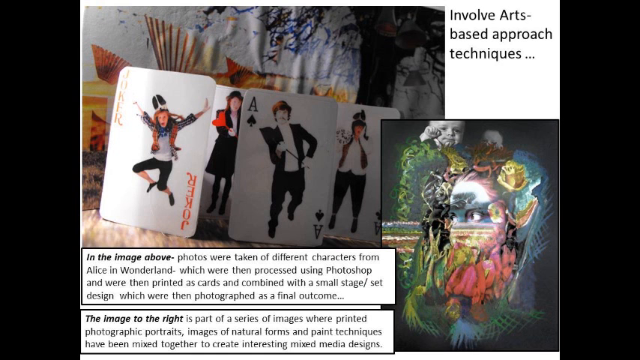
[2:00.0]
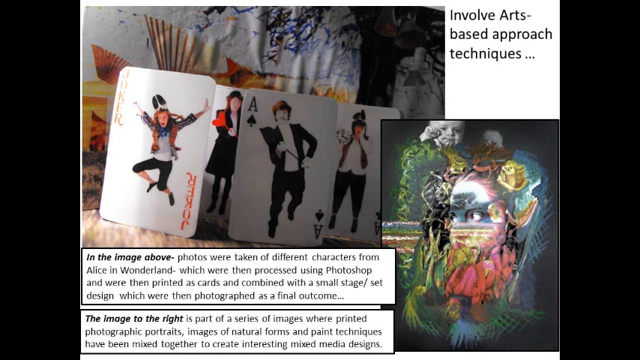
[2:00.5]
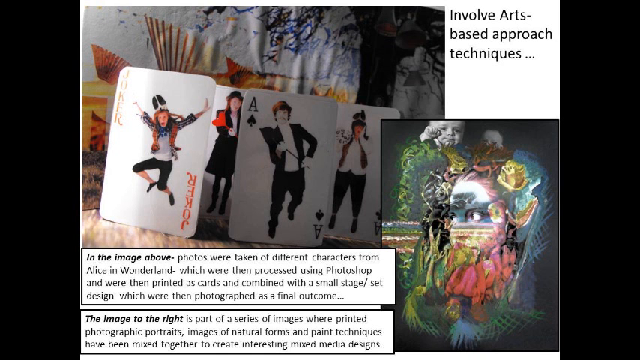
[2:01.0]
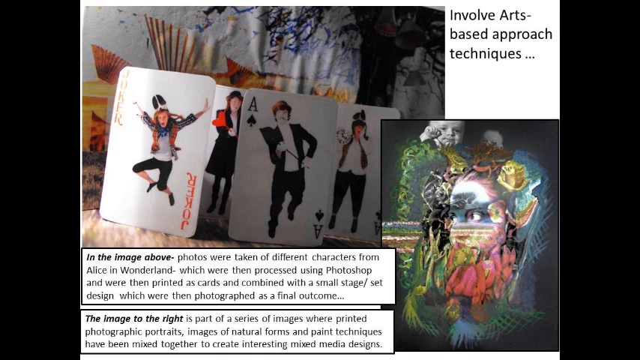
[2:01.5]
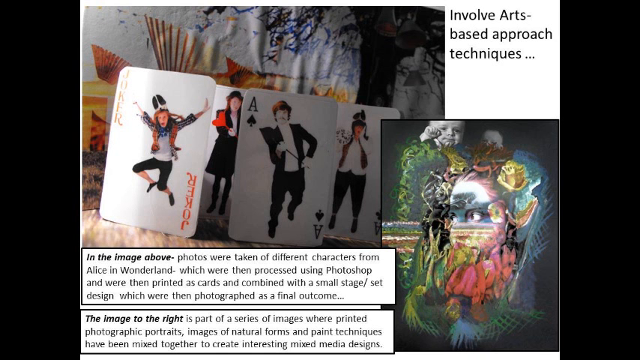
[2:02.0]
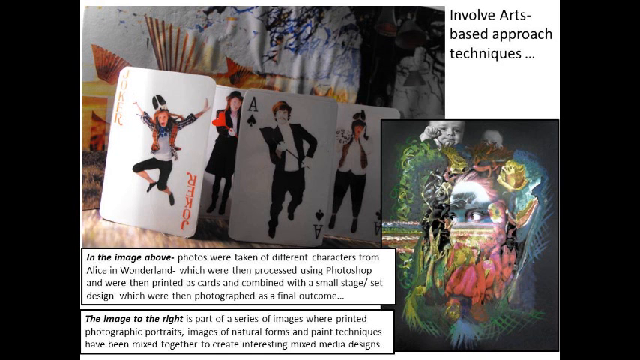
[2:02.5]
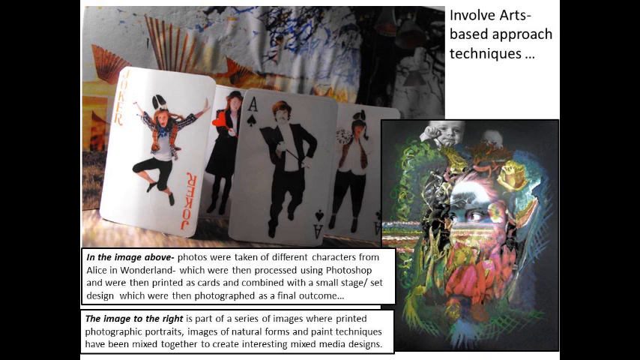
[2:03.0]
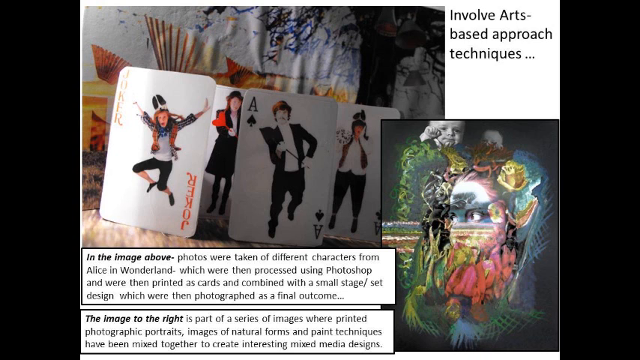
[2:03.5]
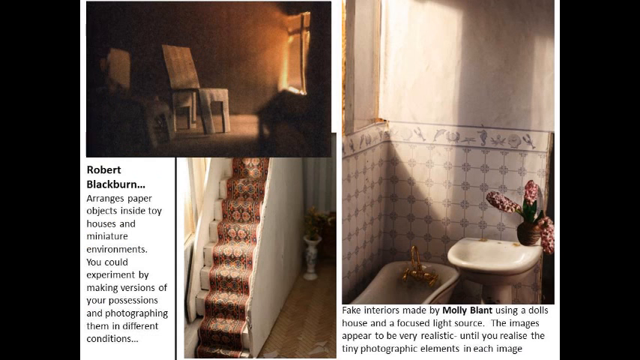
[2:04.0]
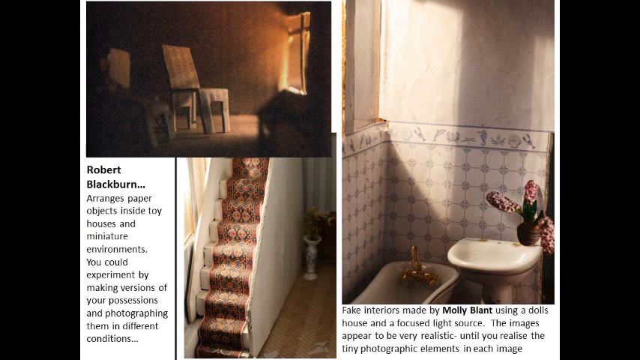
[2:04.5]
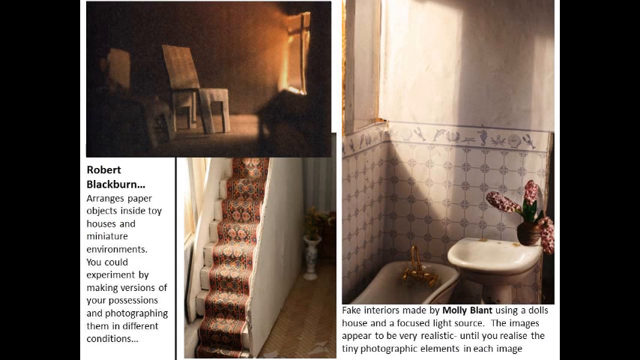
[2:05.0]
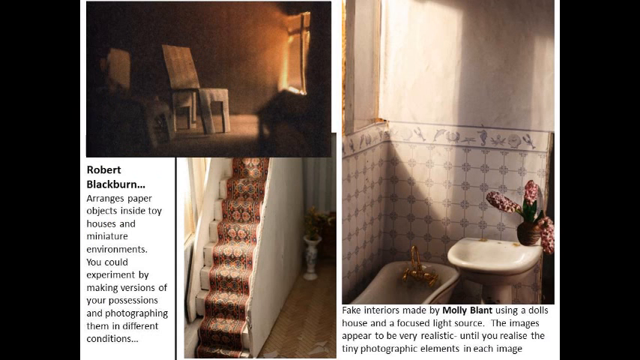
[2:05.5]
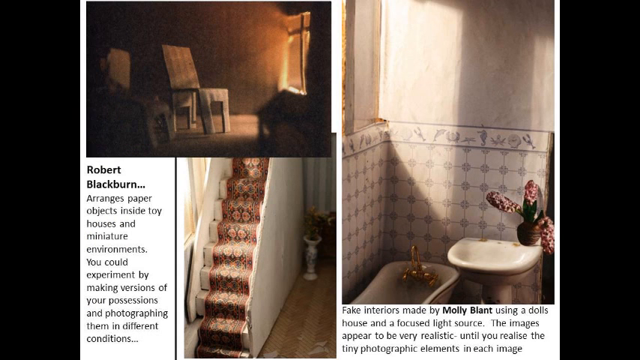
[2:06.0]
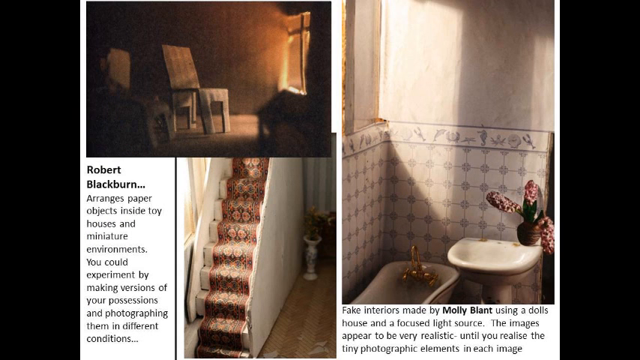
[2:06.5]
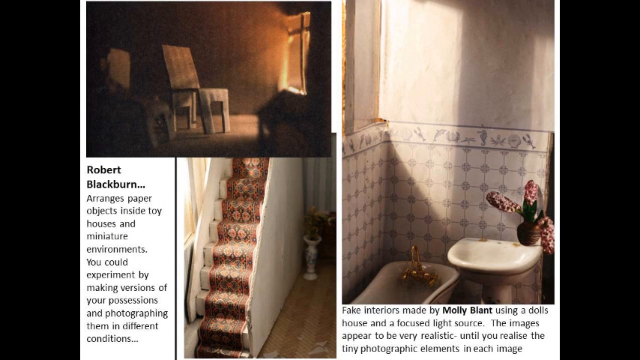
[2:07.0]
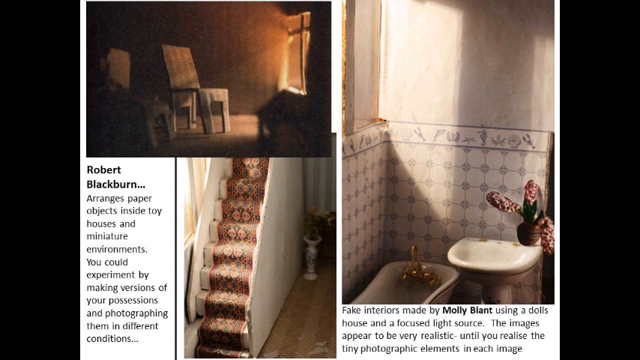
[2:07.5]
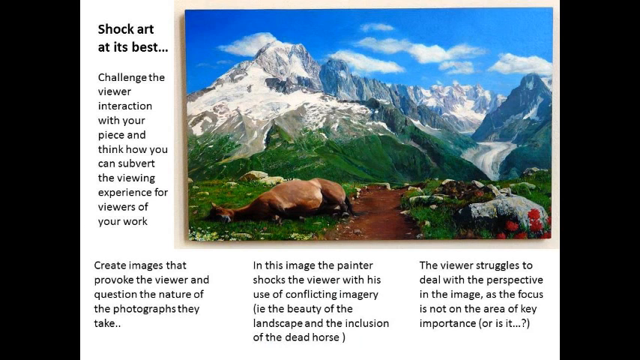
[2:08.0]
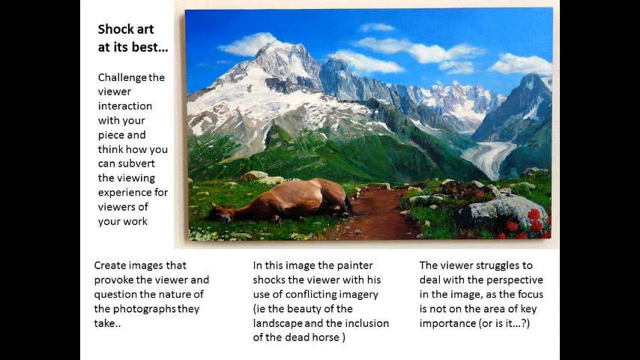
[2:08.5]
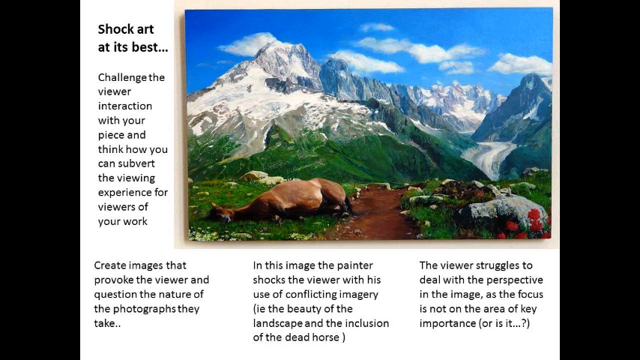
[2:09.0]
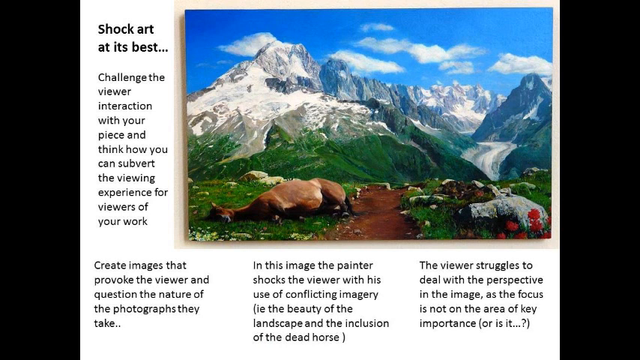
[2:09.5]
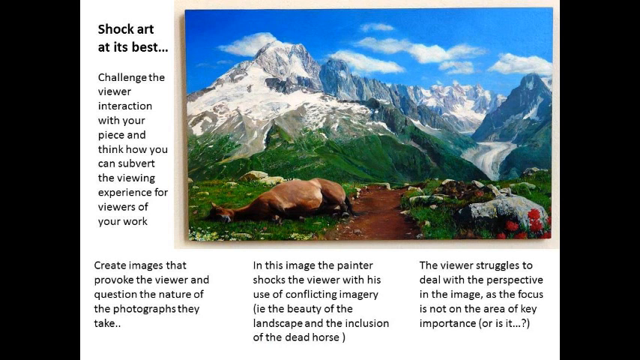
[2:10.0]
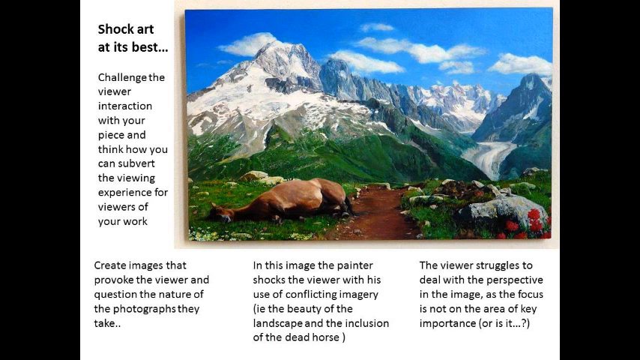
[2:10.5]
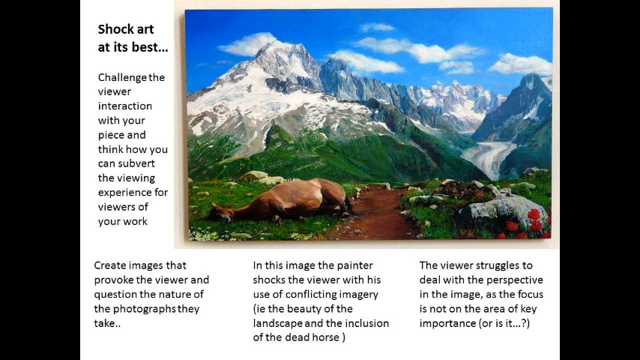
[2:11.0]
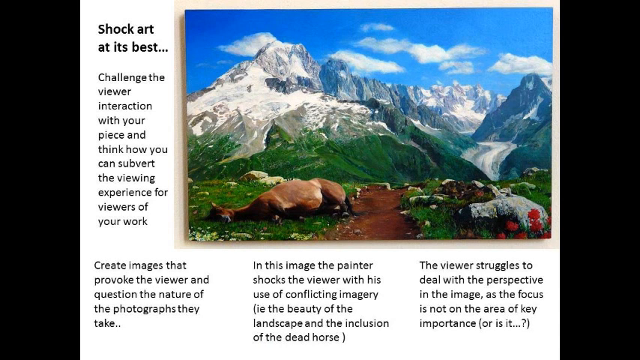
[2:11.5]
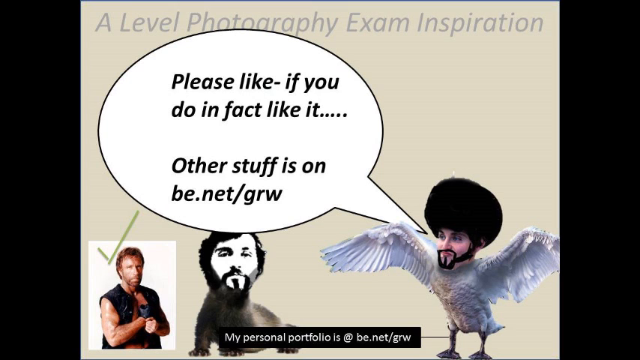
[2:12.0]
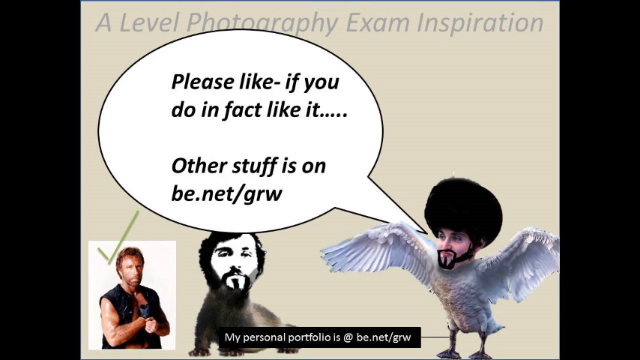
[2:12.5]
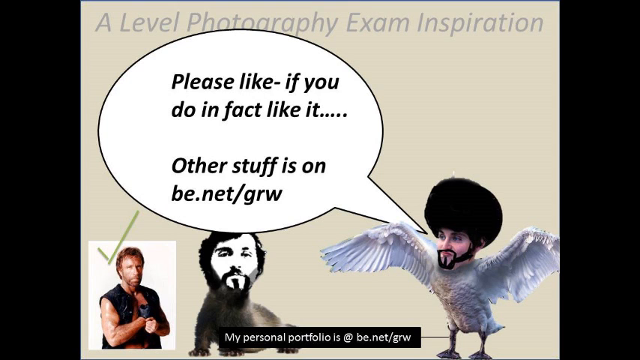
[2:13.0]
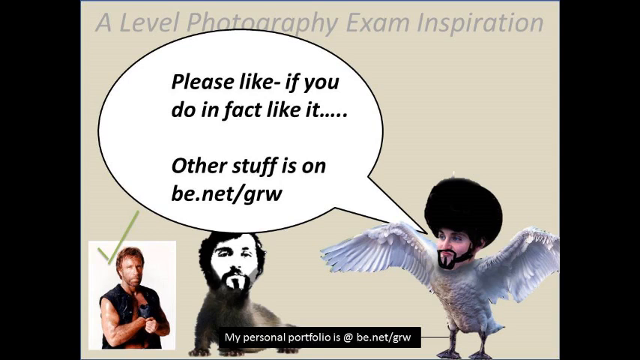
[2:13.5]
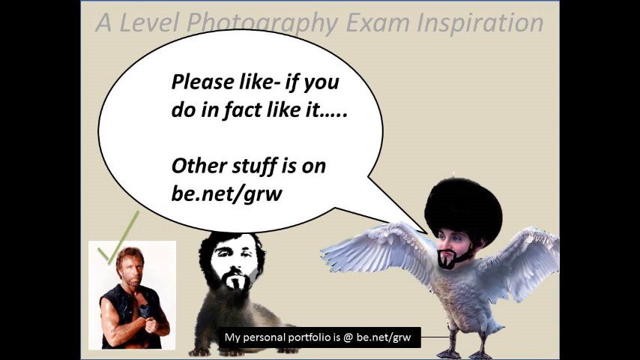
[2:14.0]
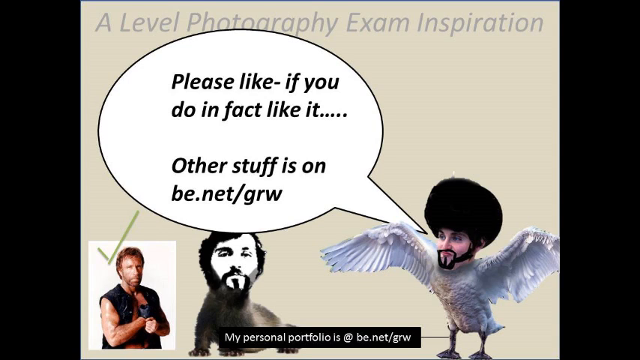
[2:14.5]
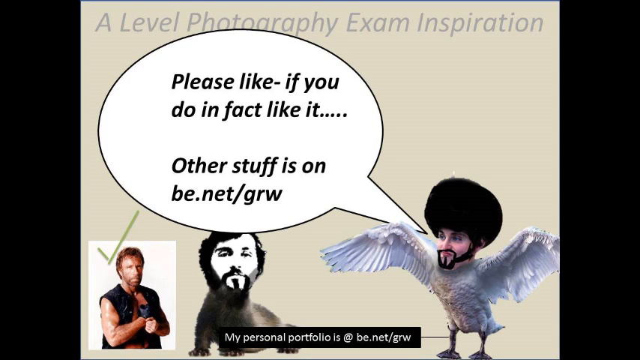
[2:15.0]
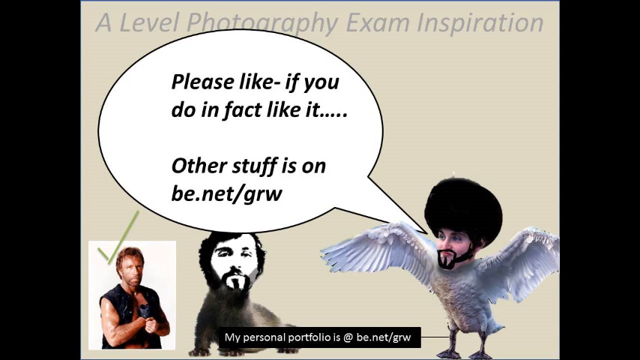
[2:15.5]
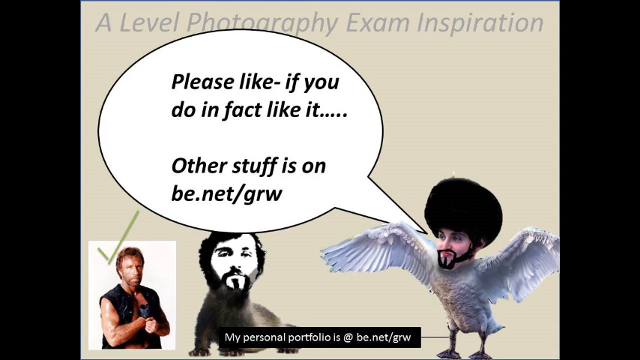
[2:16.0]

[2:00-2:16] In the left corner of the screen is a photograph of a young white boy wearing green, and a woman's face in different colors. There are also cards where the Joker is replaced with a photograph of a human and the Ace of Spades is shown as a human being. The next slide is by Robert Blackburn, who arranges paper objects inside toy houses and miniature environments. The next slide says "shock at its best. Challenge the viewer interaction with your piece and think of how you can subvert the viewing experience for viewers of your work." The last slide asks viewers to like the video and points to other work on be.net. An image of a Muslim woman in headgear is shown.